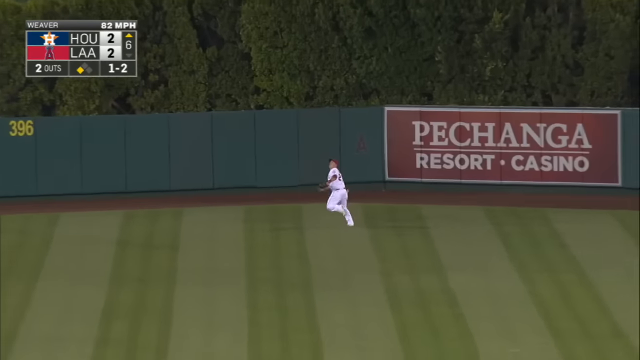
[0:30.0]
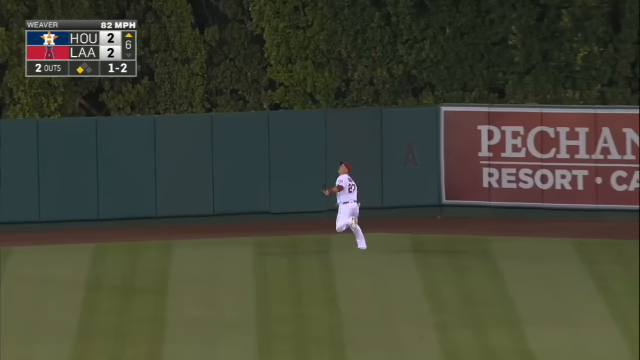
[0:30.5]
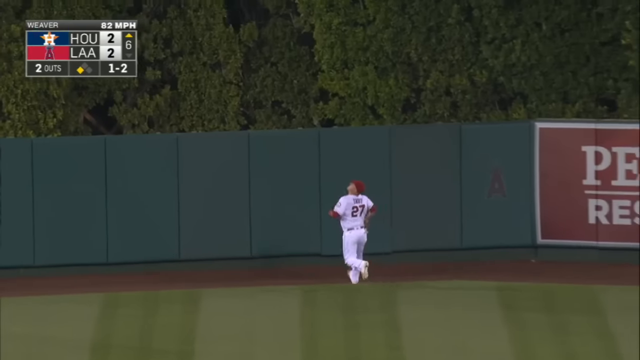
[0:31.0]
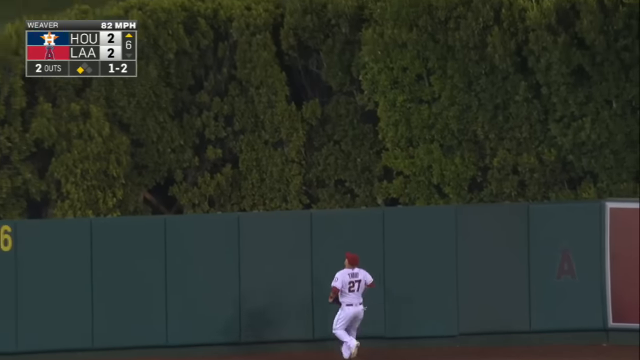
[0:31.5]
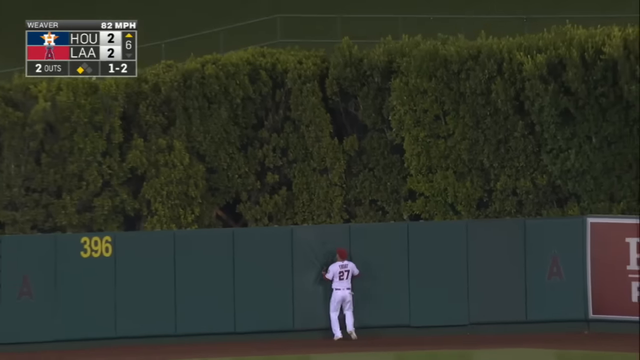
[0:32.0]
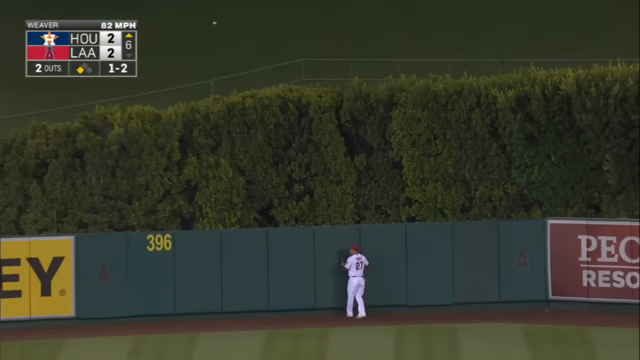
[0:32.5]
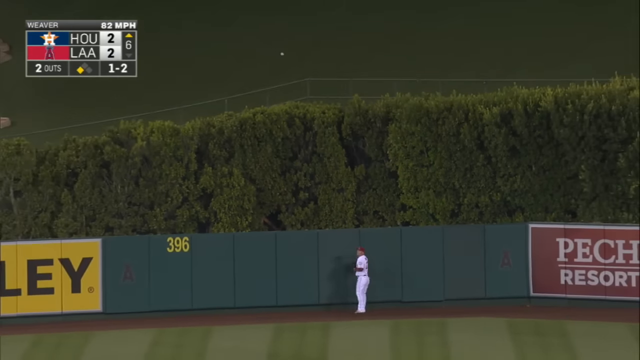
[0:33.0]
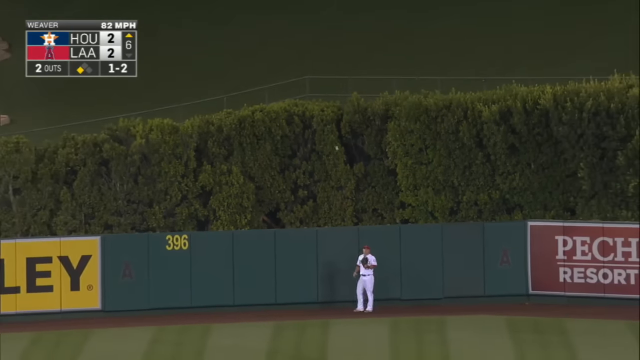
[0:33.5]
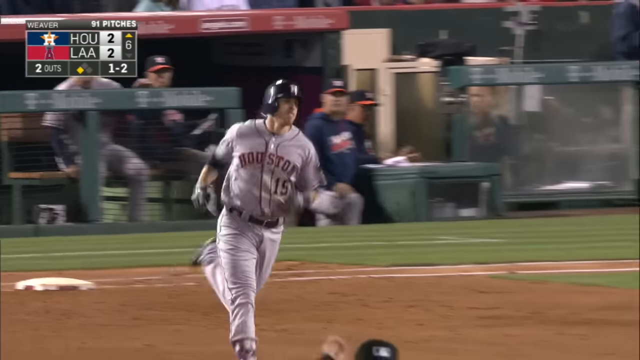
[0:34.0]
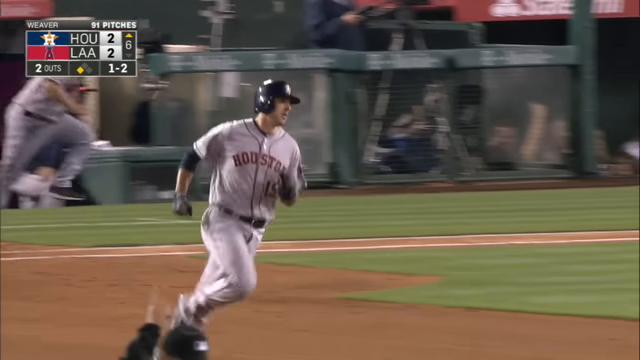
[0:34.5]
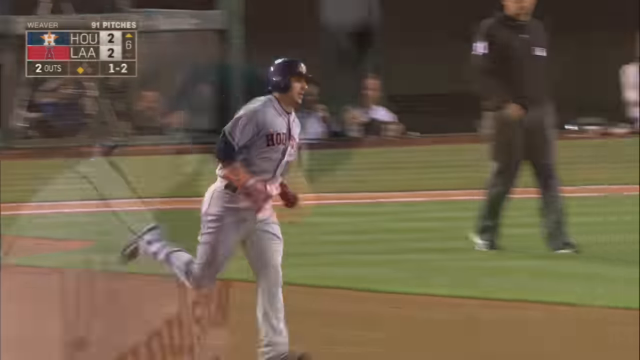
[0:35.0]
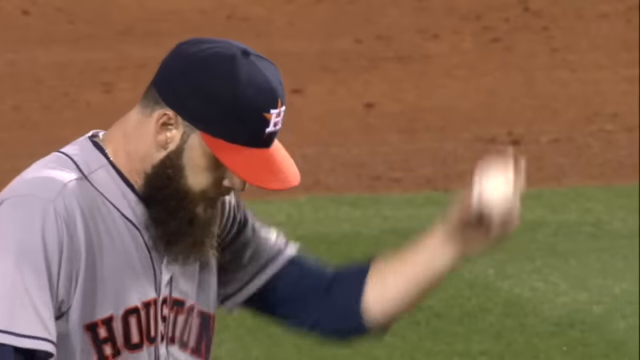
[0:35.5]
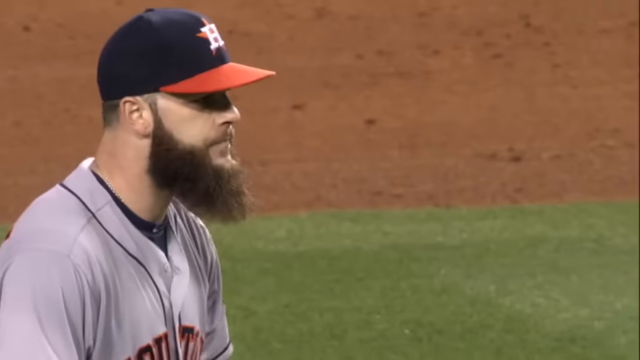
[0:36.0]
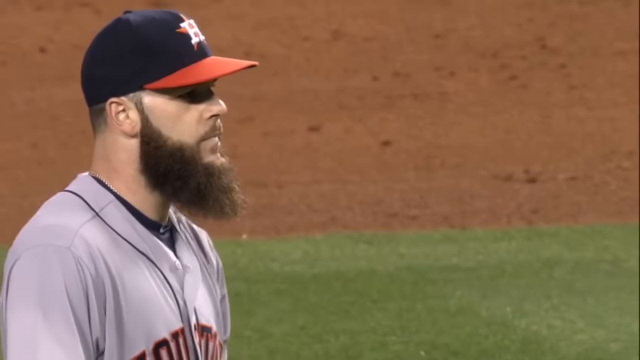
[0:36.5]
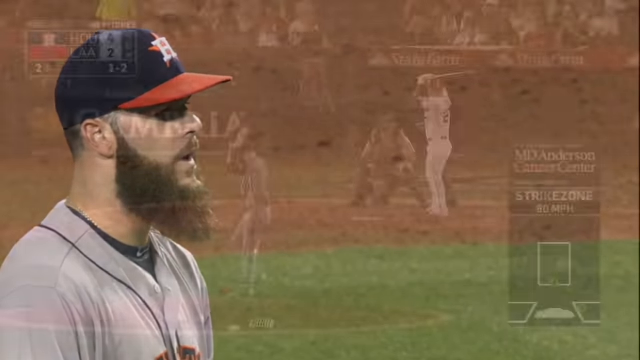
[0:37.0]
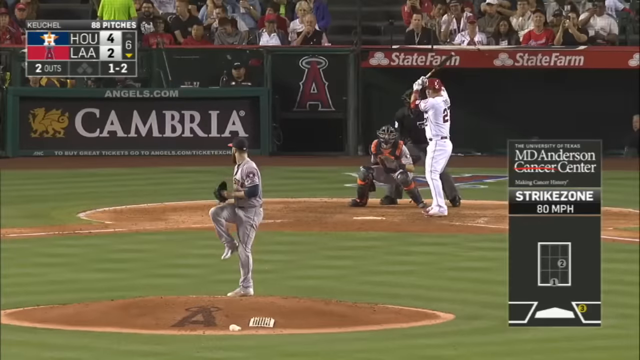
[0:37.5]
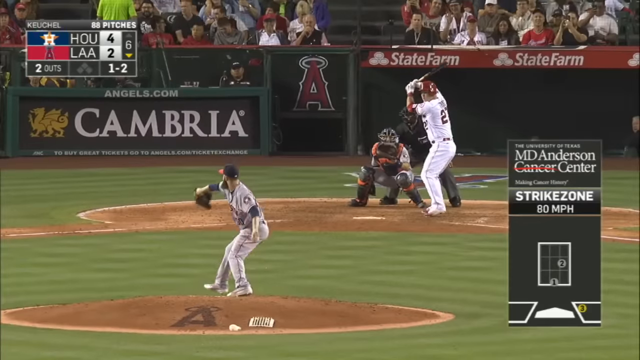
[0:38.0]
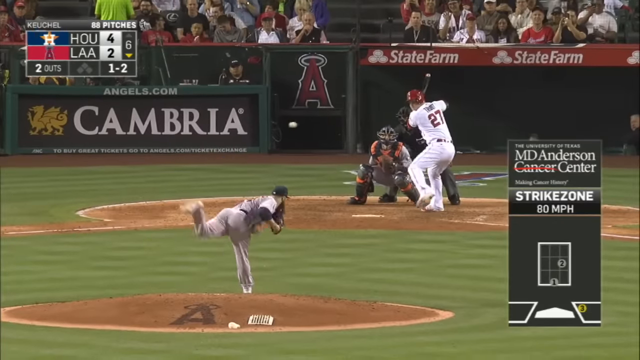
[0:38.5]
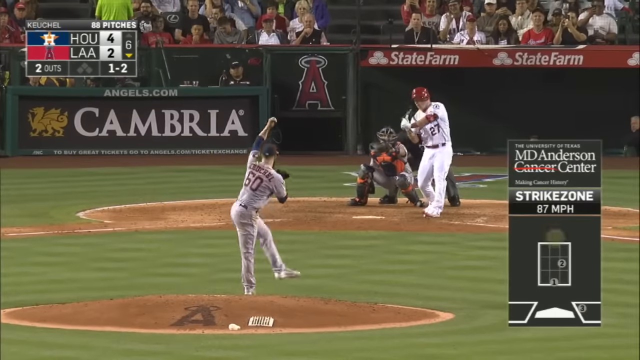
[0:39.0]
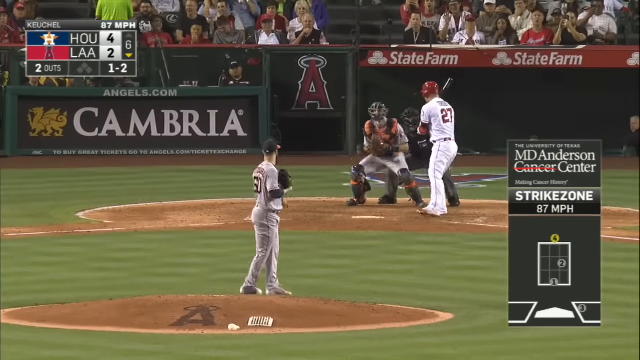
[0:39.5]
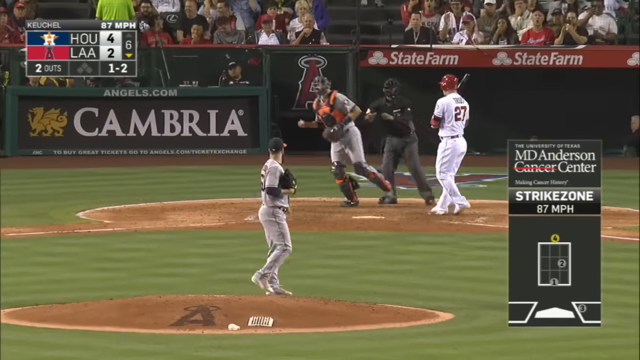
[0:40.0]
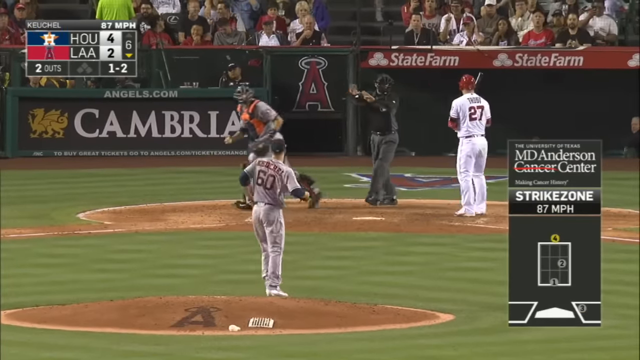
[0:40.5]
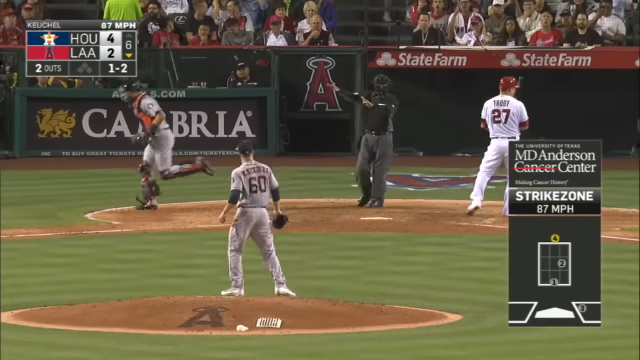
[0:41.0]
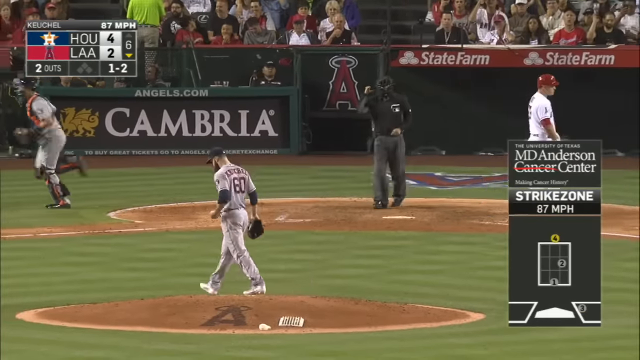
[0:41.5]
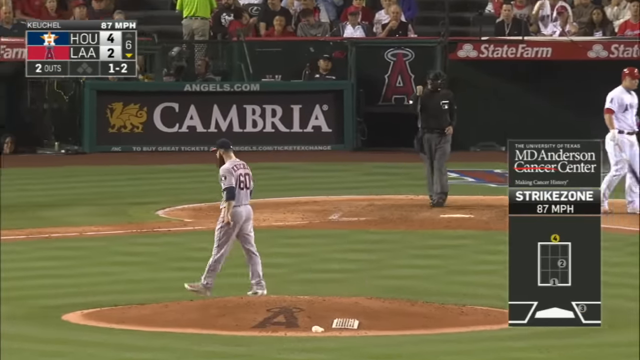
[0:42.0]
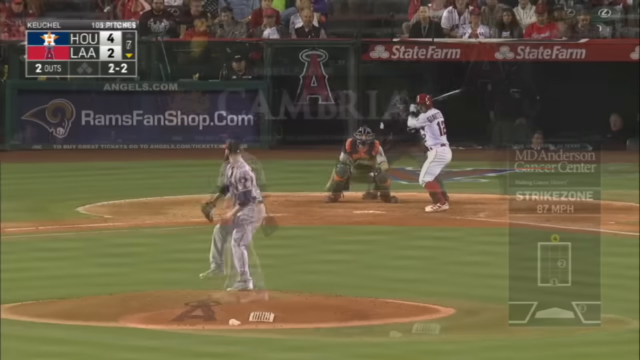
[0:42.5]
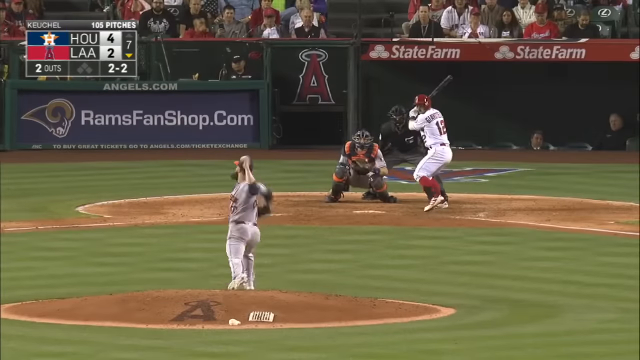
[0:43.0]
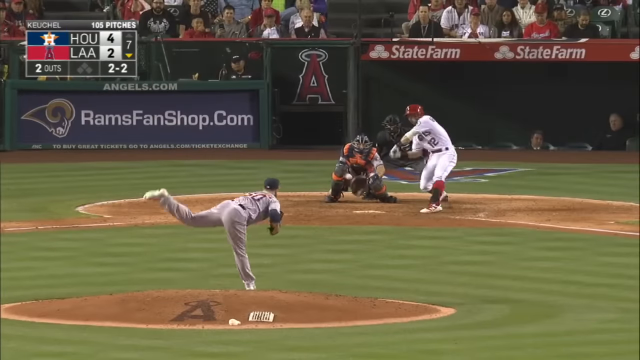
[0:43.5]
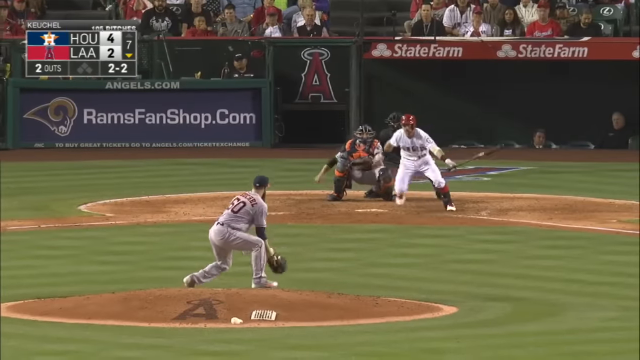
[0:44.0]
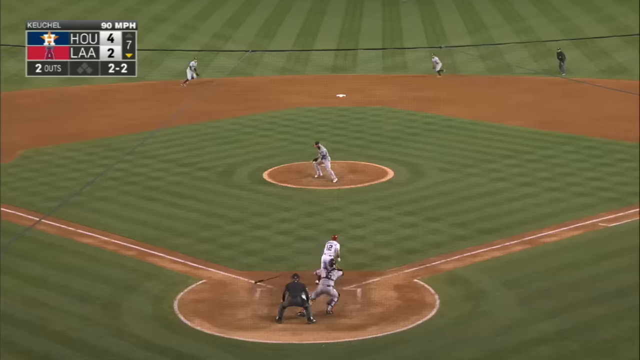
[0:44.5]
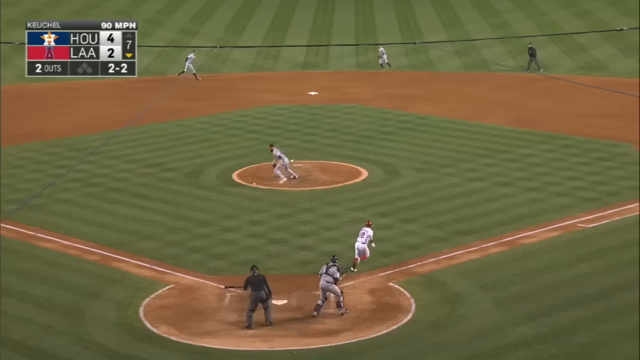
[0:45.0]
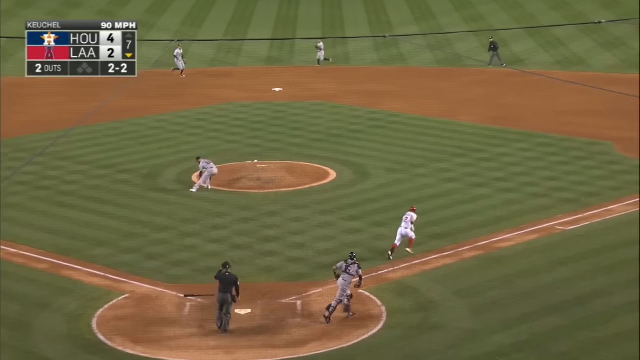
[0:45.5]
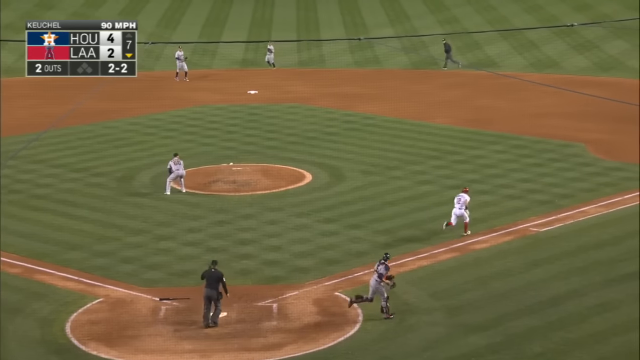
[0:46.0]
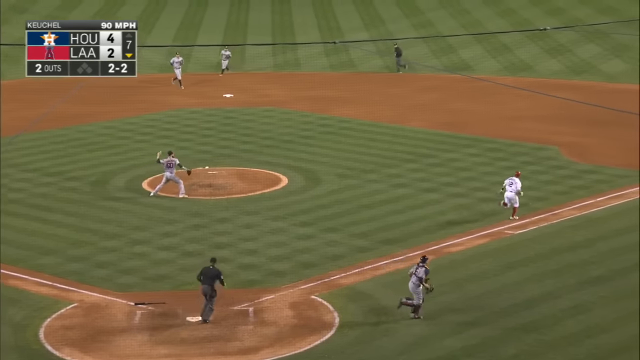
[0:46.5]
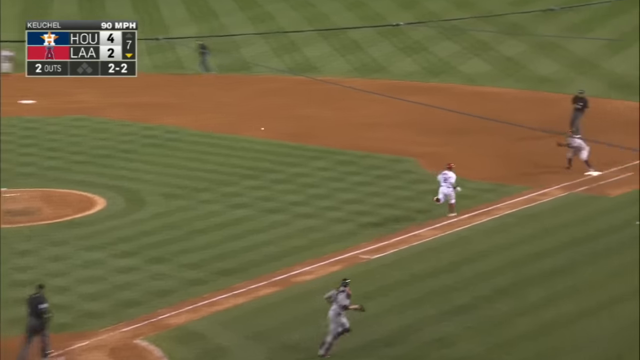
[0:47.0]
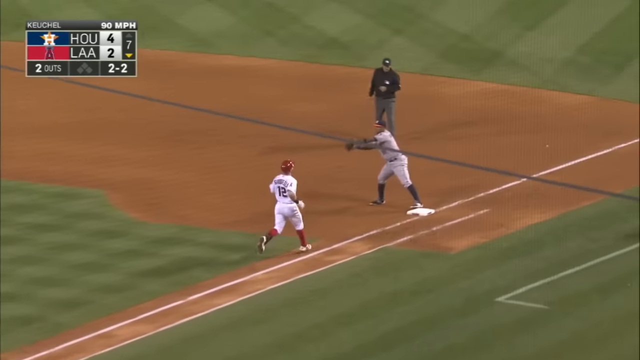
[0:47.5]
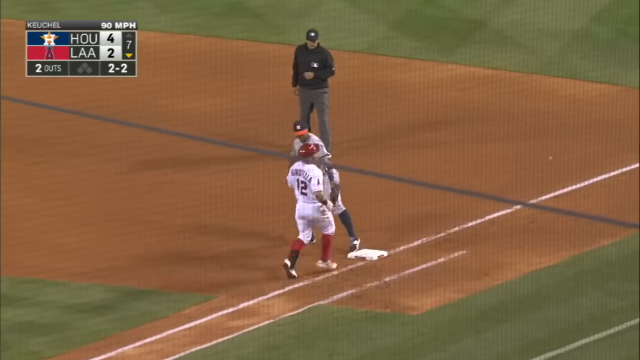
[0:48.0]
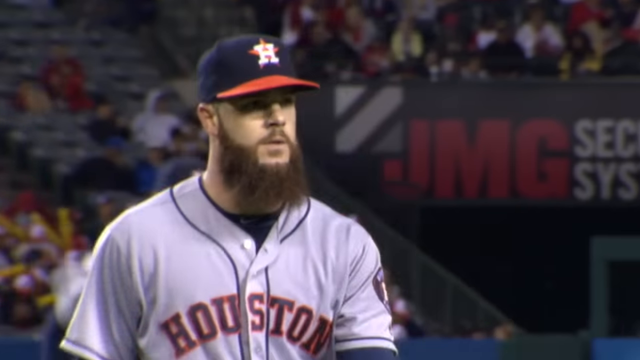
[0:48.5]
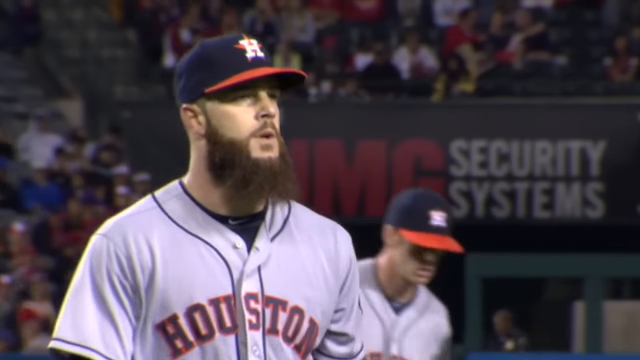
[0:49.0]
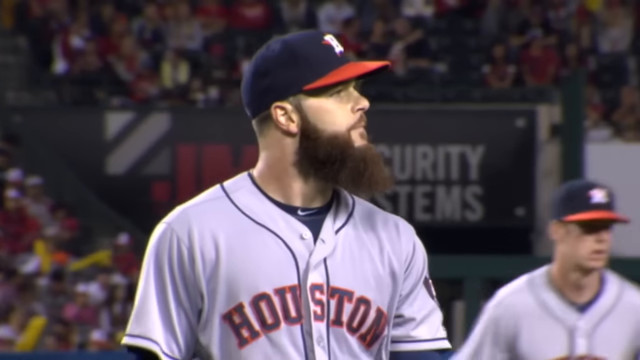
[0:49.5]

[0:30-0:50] The center fielder runs at full speed, looking into the air, and approaches the wall to see how close he is. He slows down as he reaches the wall and places both hands against it to brace himself. The ball lands far above the wall and into the stands, and he turns back around. The scene transitions to a player in a gray jersey with blue letters rounding first base toward second. A pitcher standing on the mound has the ball in his left hand raised above his head; he lowers the ball into his glove and looks forward toward home plate. From a behind view of him on the mound, he winds up with the ball in his left hand, brings it back, then forward, and throws it toward home plate. The batter tries to check his swing but does not; the umpire rules that the ball hit his bat and the catcher caught it for strike three. The players jog and walk off the field. The pitcher then throws another pitch, and this time the batter hits the ball so it bounces straight back at the pitcher. The pitcher lowers the glove on his right hand and catches the ball, but it falls out. He takes a few steps to pick it up, grabs it in his left hand, and throws to first base, where the first baseman catches it with his foot on the base. The pitcher then walks off the field, turning his head slightly into the air.